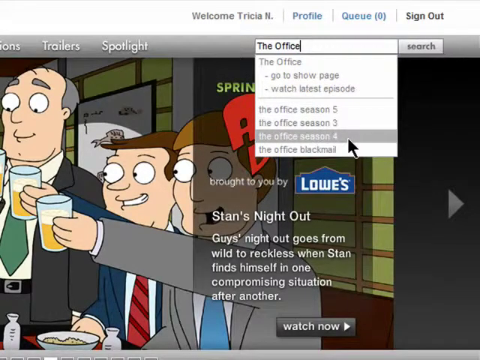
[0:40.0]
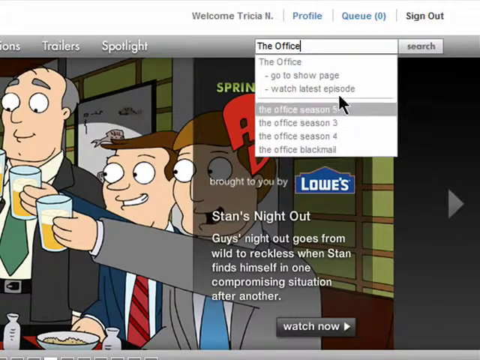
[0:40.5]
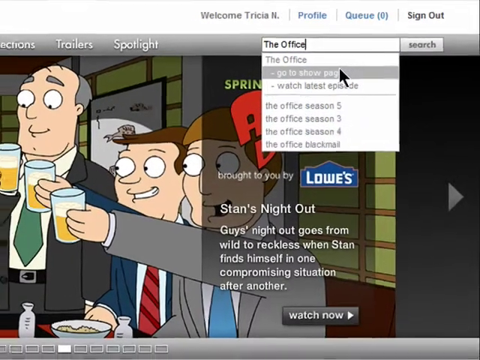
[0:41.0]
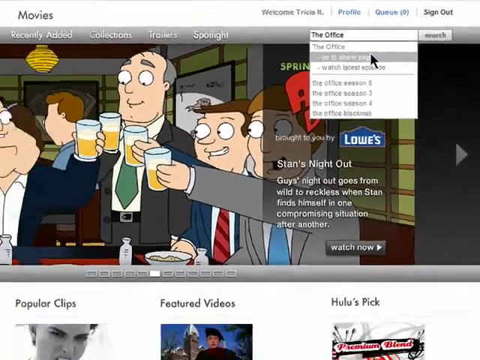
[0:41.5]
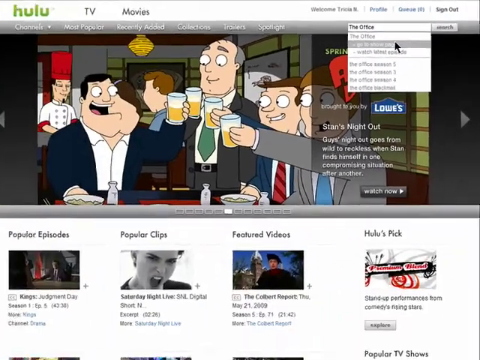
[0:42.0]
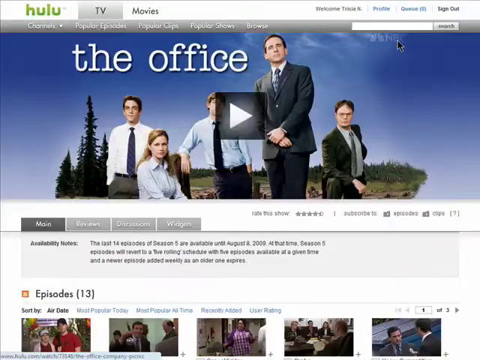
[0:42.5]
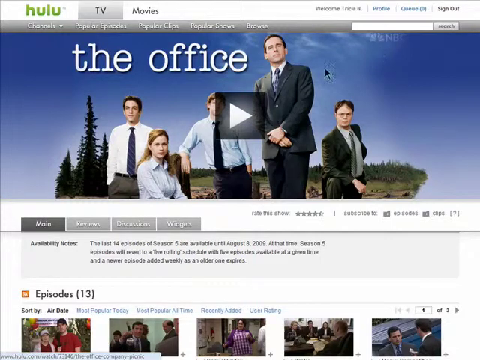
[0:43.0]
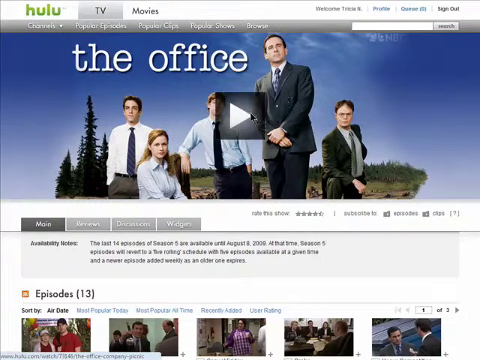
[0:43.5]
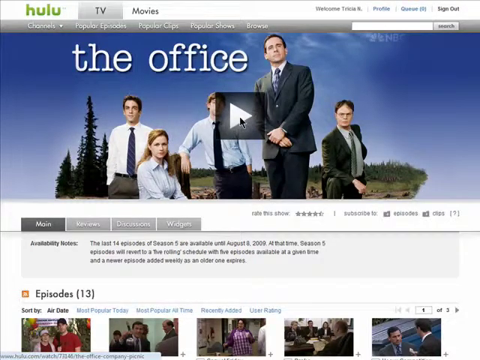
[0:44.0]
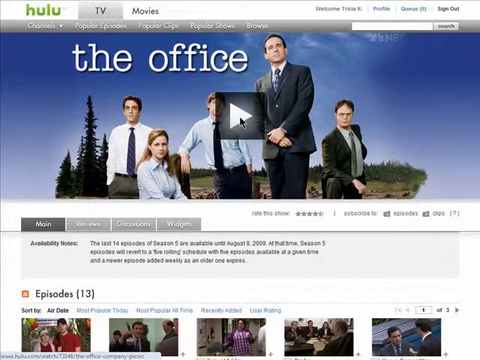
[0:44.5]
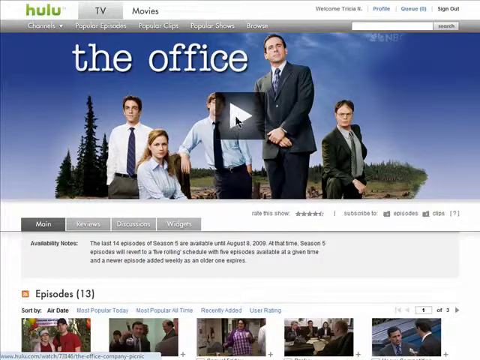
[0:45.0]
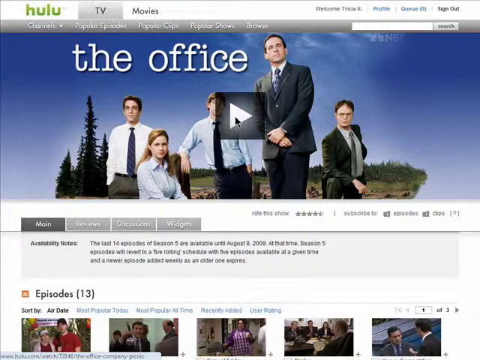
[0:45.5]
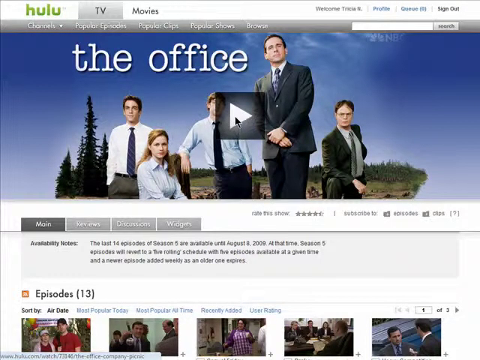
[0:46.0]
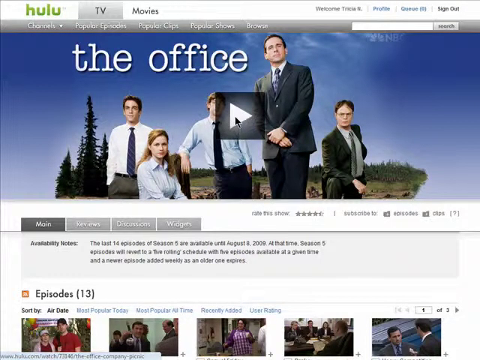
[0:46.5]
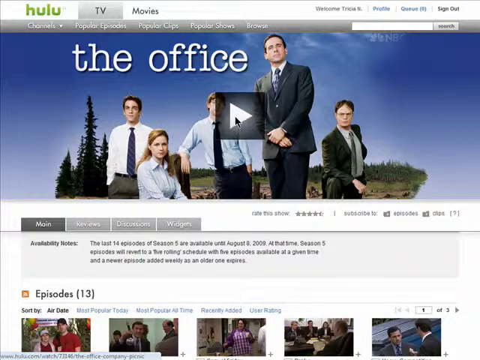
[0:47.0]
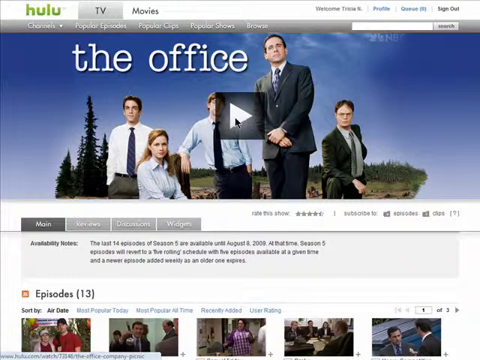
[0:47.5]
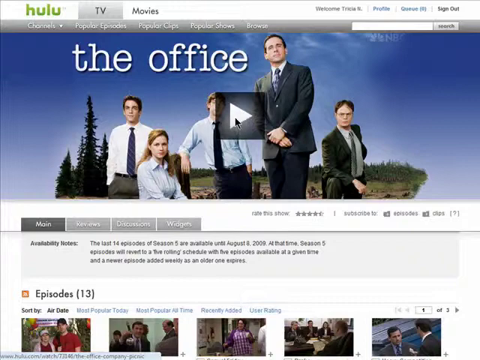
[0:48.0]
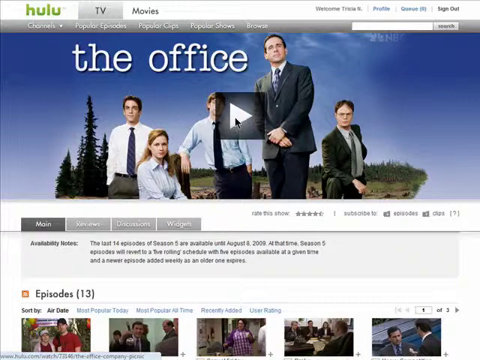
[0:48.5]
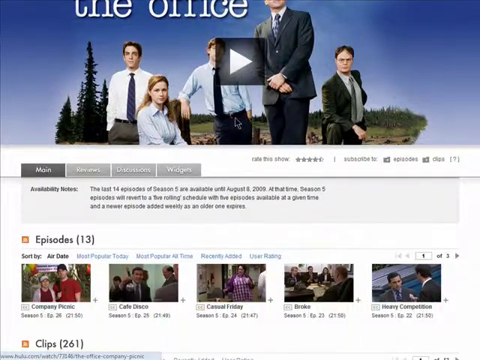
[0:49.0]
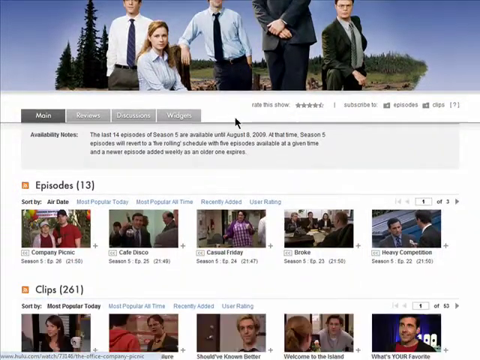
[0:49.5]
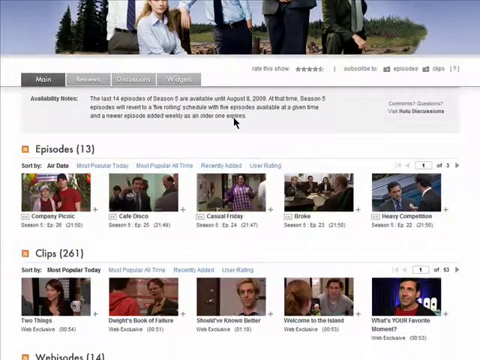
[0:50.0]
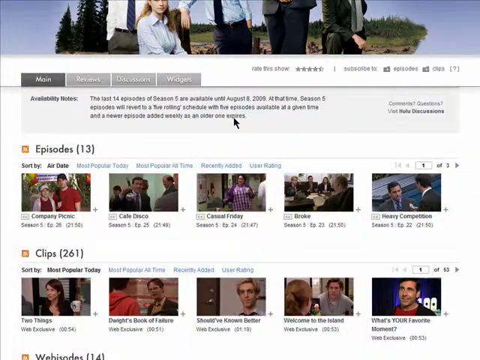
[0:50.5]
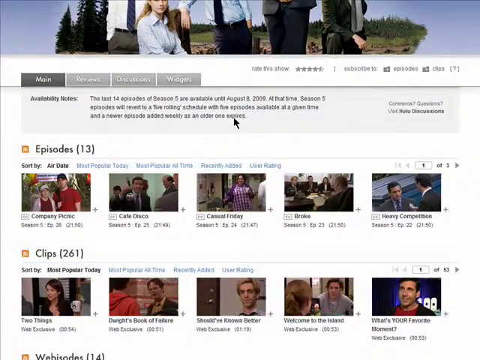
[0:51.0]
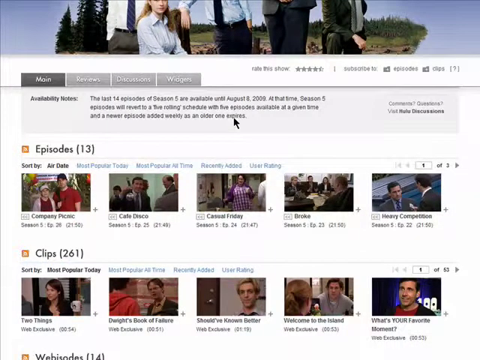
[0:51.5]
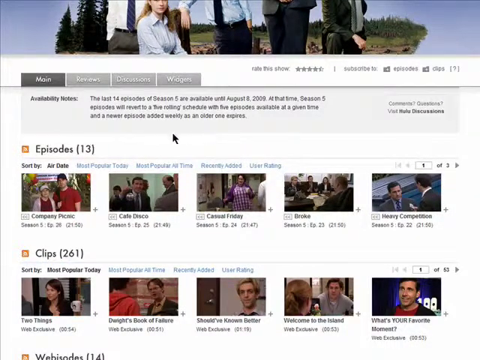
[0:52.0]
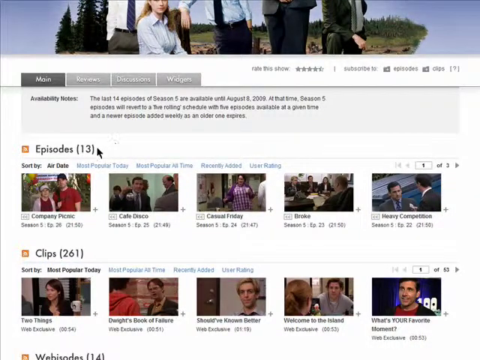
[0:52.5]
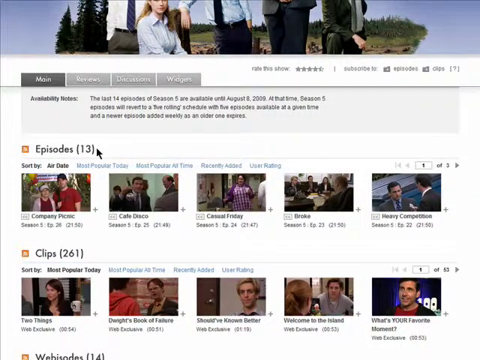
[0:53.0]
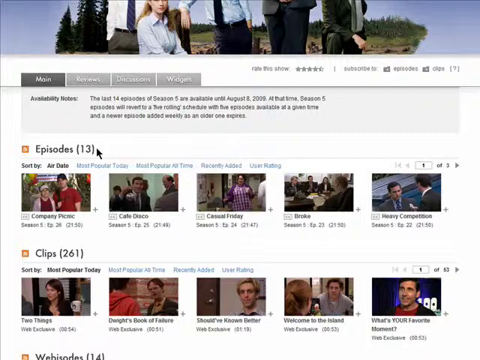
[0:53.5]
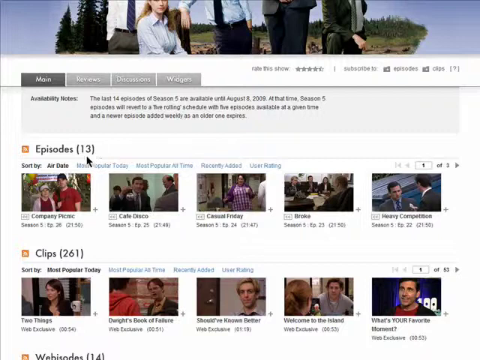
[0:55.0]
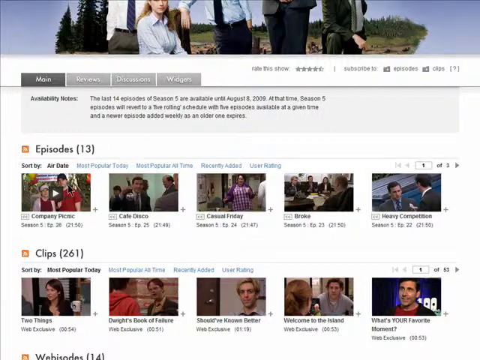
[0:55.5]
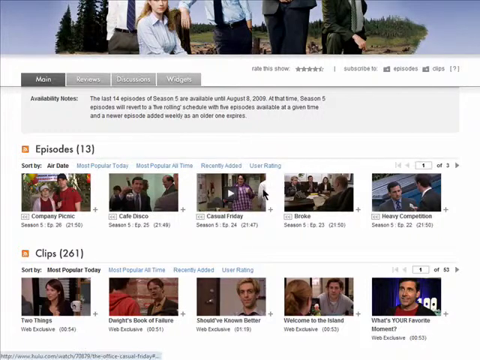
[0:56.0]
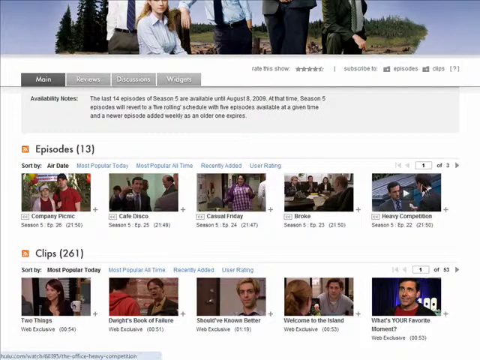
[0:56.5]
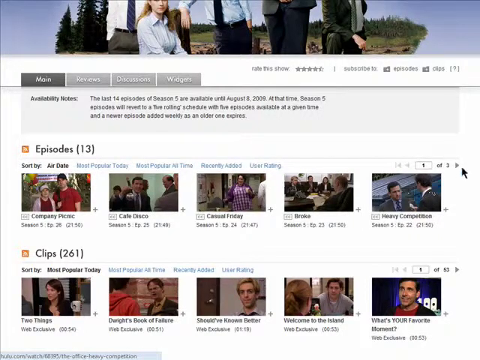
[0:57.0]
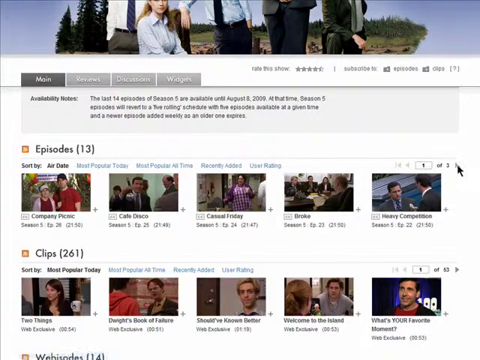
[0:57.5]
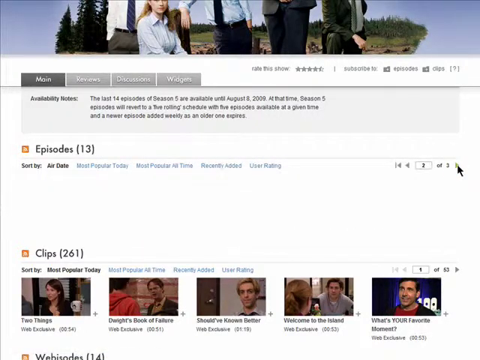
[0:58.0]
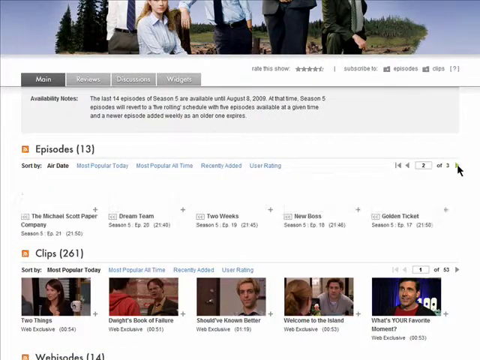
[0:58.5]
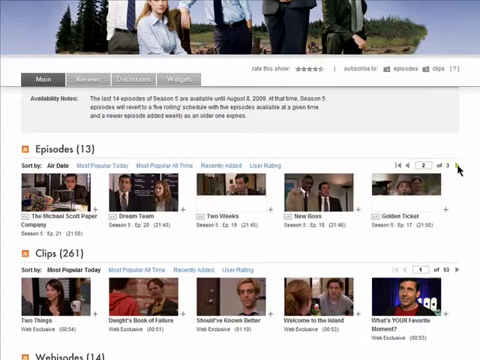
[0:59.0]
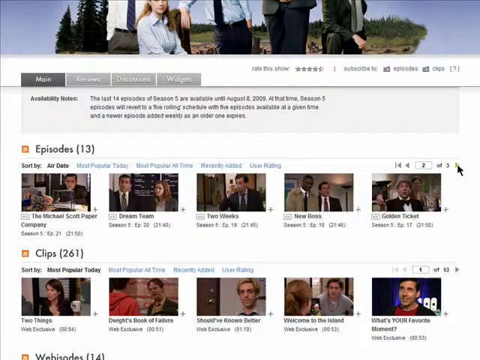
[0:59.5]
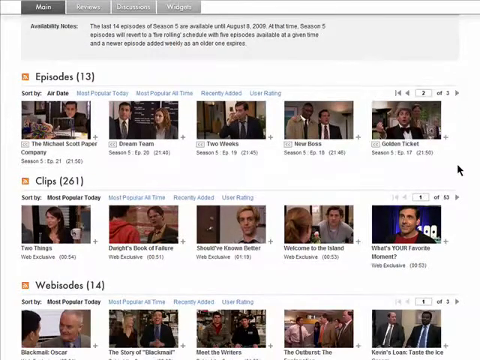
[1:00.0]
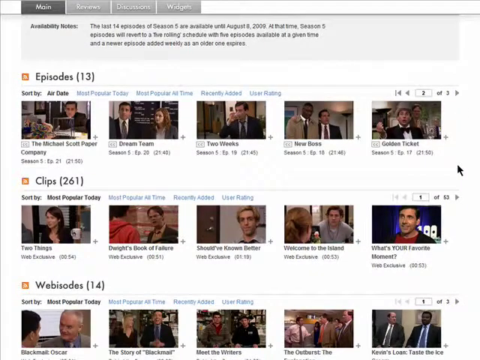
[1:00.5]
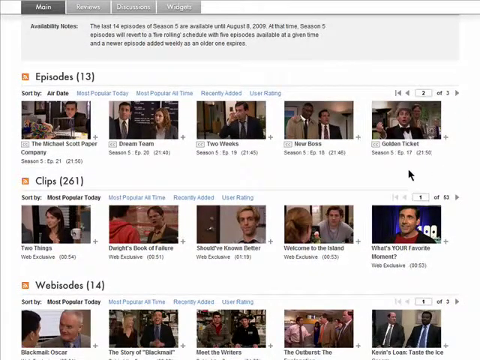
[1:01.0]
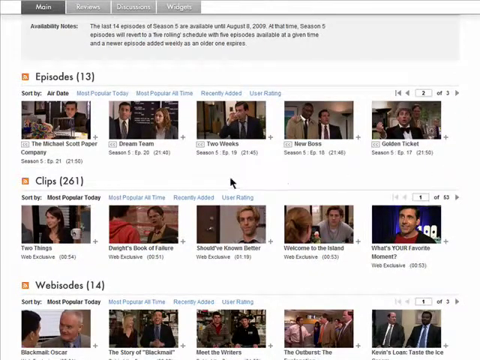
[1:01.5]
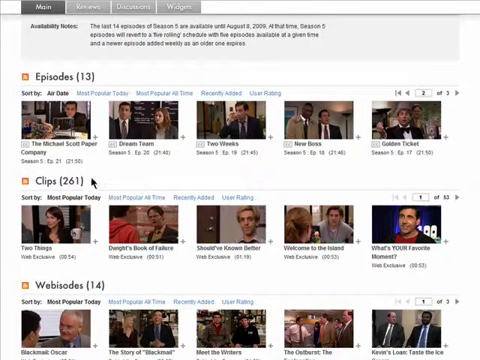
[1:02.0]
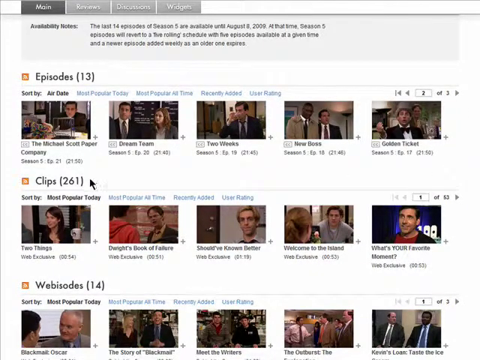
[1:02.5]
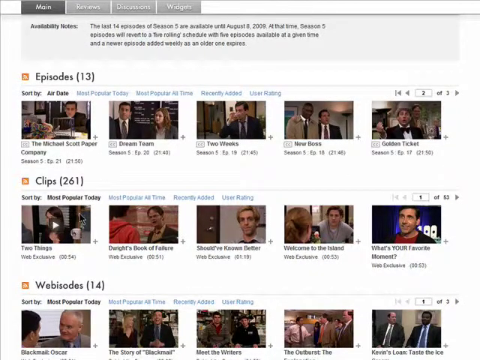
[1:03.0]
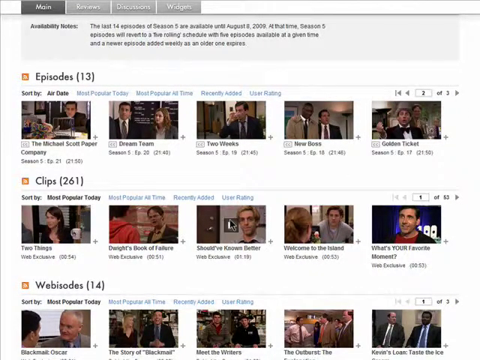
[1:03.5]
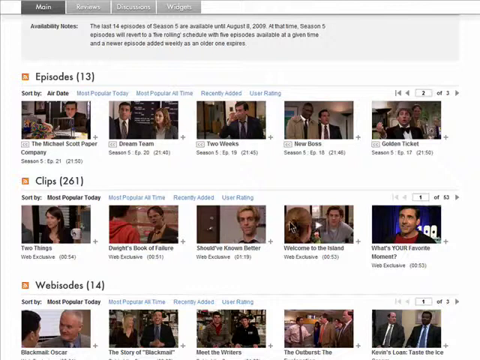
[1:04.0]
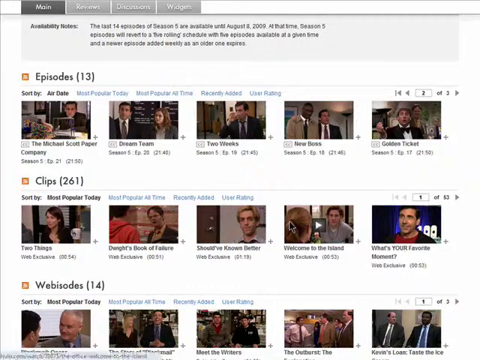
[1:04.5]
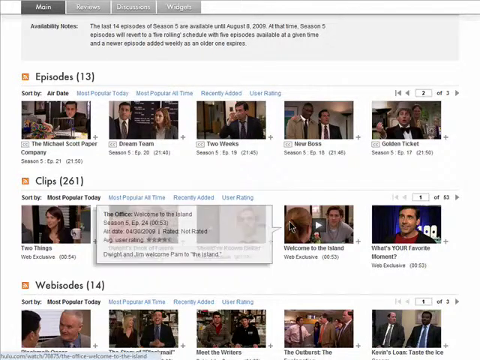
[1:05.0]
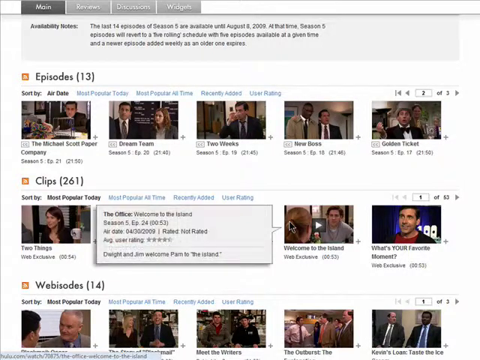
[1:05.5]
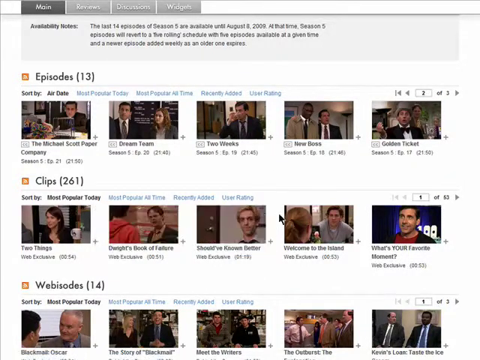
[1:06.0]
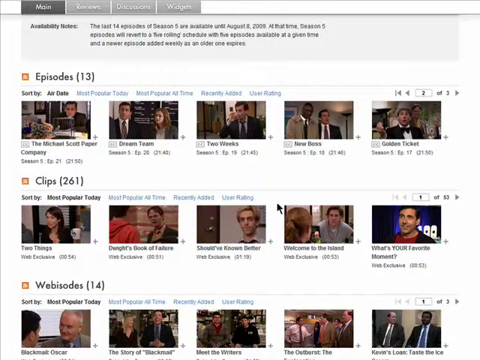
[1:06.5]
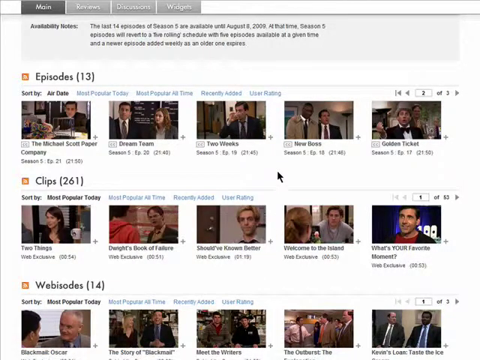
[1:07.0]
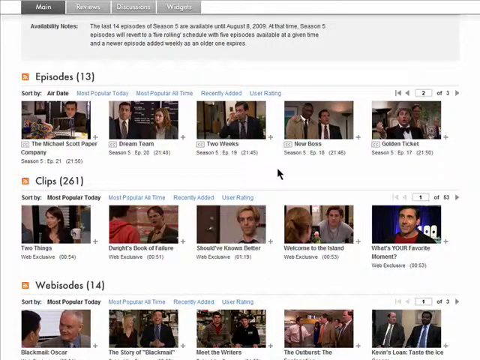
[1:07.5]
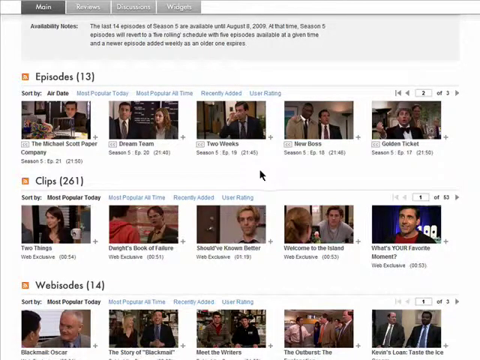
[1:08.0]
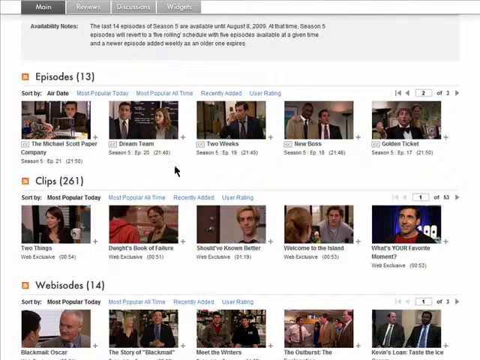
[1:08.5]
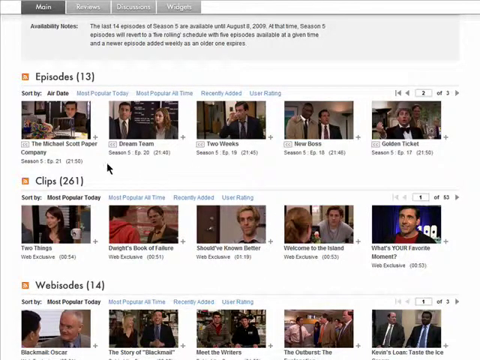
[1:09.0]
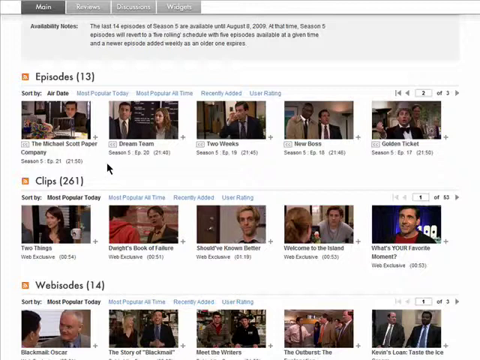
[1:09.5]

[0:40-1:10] The user has typed "the office" into the search bar and pulled up a pop-up box, already scrolled down to "office season four," which is highlighted in gray with the arrow pointing at it. In the background is an image of the characters from American Dad, for the episode "Stan's night out," with the text "Guys' night out goes from wild to reckless when Stan finds himself in one unpromising situation after another." Beneath this is a gray button with "Watch Now" written on it. Next, "go to the show page," referring to the show page for The Office, is highlighted with the cursor pointing at it. The video zooms out, the user clicks it, and the screen shows The Office and its cast members. The user clicks the play button, then scrolls down, moves her cursor over the episodes, clicks the arrow to go to the next set of episodes, moves to the next row of episodes, and moves her cursor back up toward the first row.